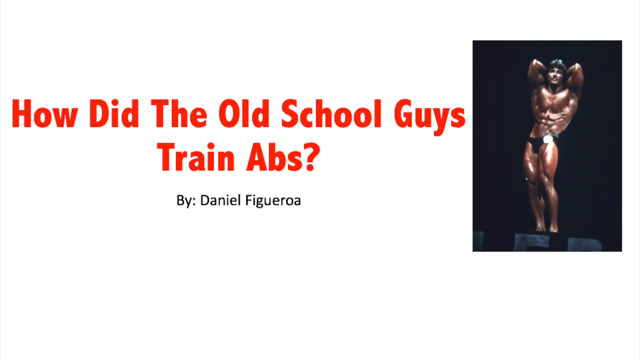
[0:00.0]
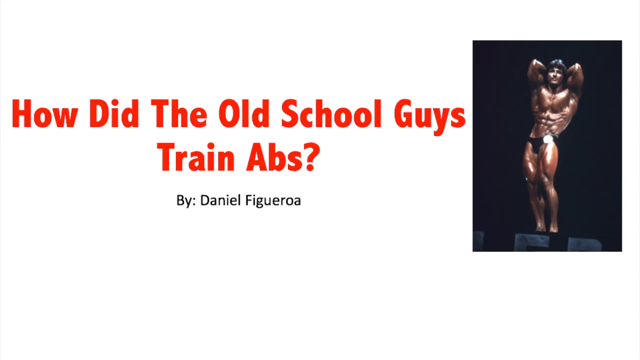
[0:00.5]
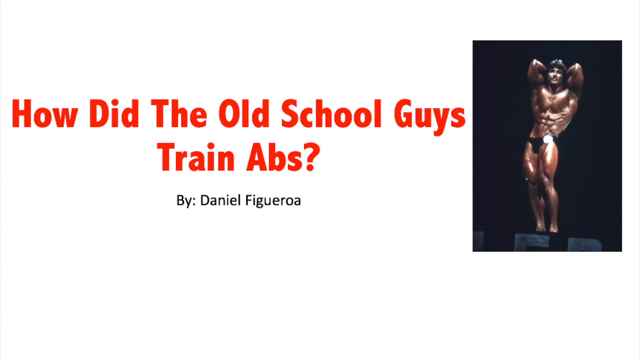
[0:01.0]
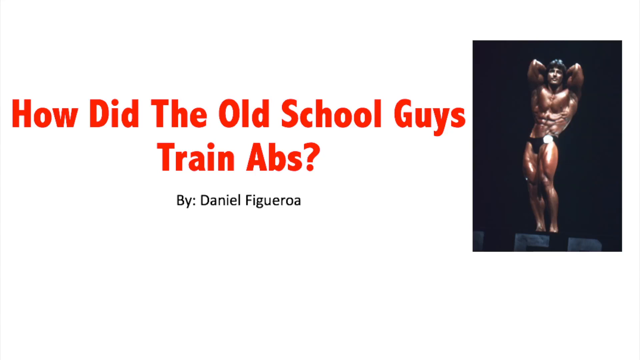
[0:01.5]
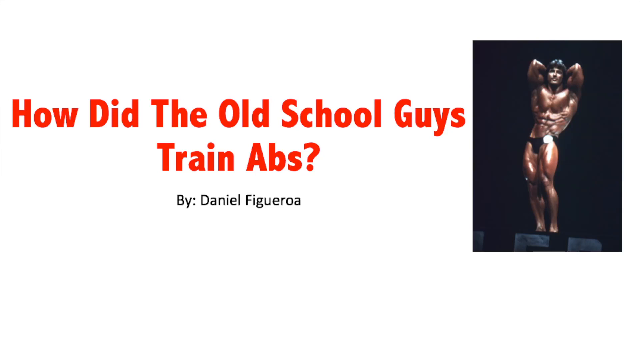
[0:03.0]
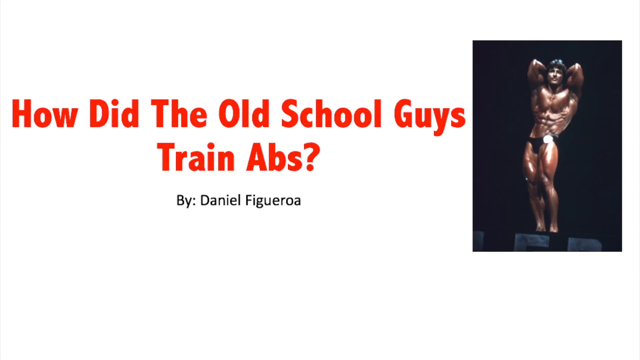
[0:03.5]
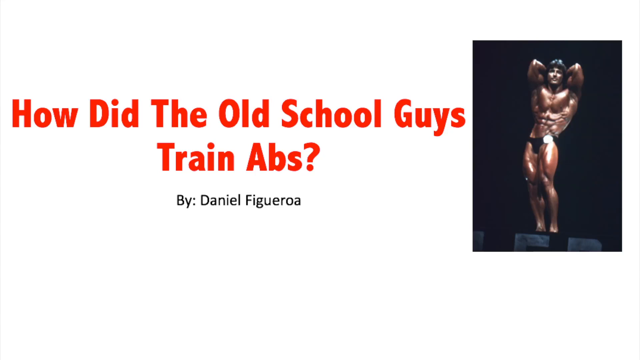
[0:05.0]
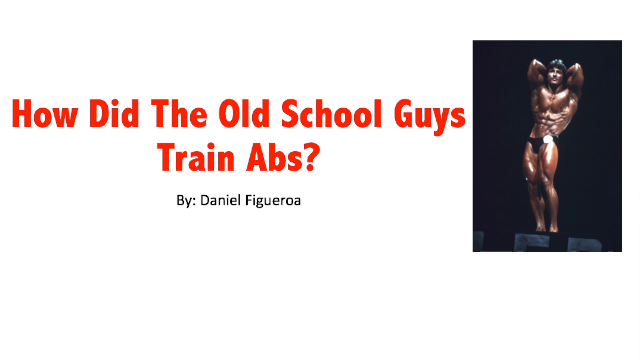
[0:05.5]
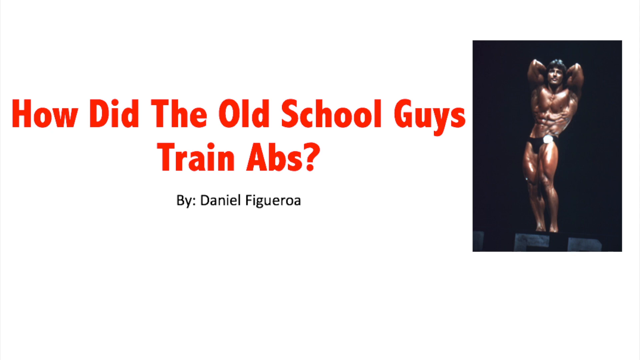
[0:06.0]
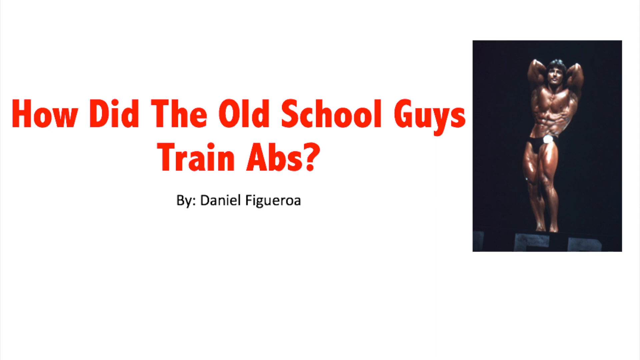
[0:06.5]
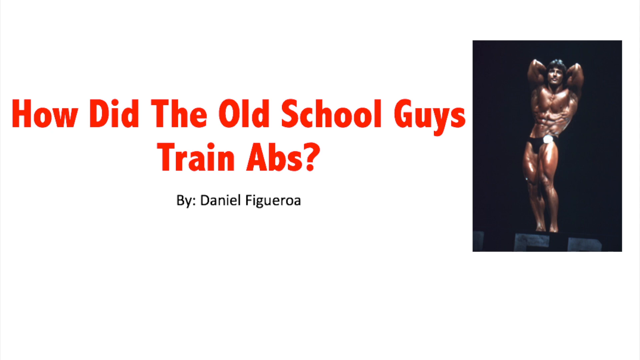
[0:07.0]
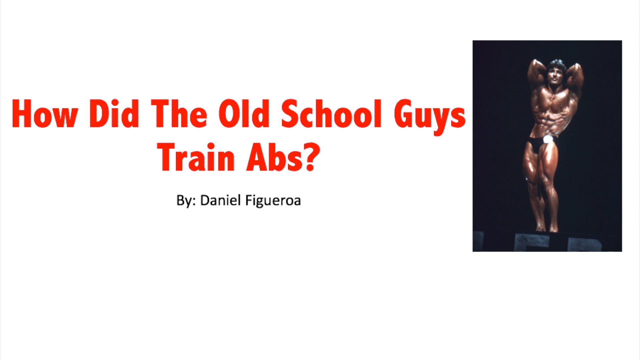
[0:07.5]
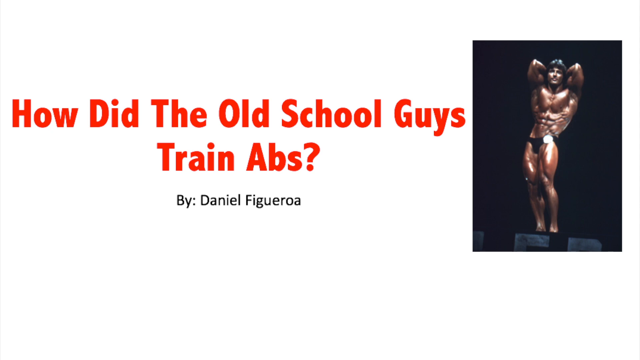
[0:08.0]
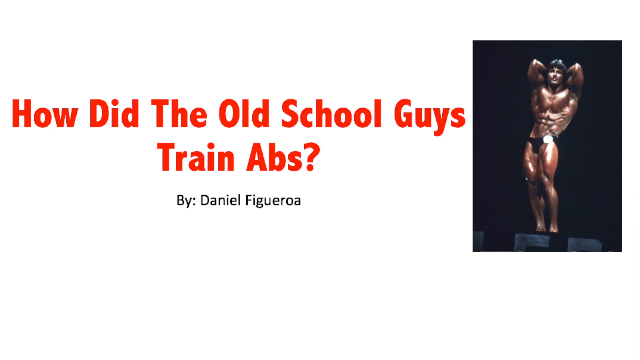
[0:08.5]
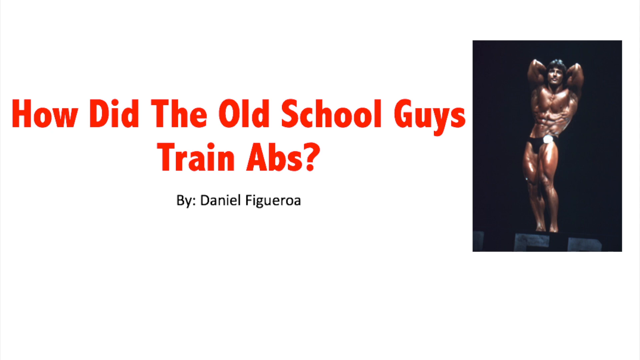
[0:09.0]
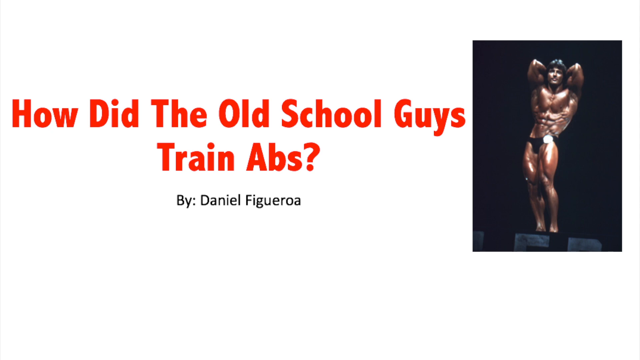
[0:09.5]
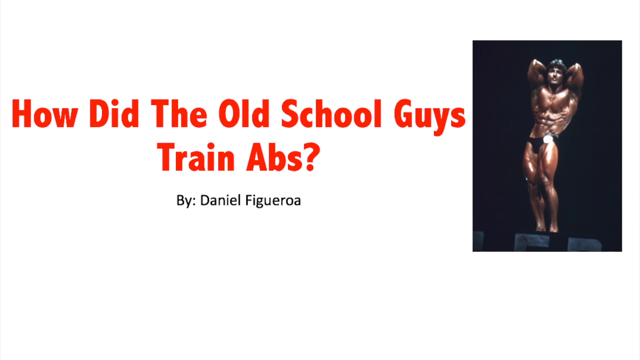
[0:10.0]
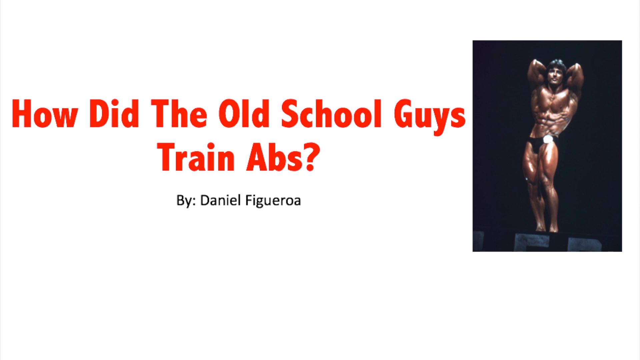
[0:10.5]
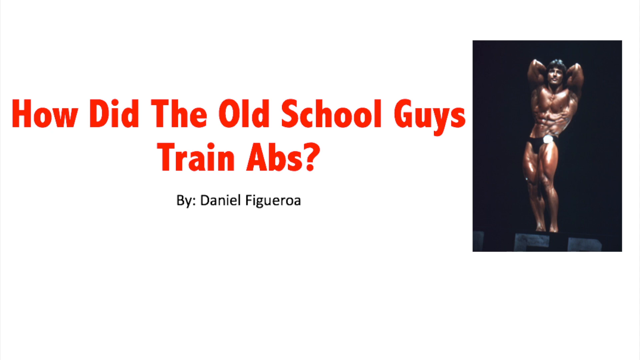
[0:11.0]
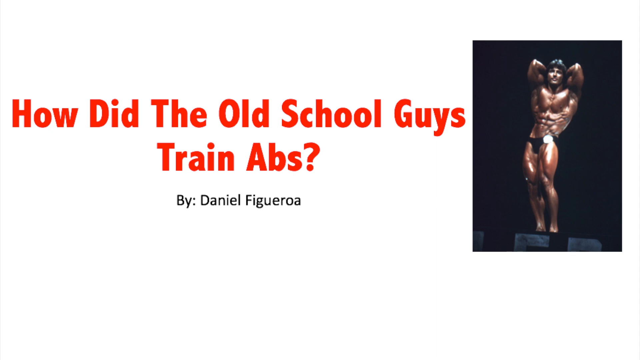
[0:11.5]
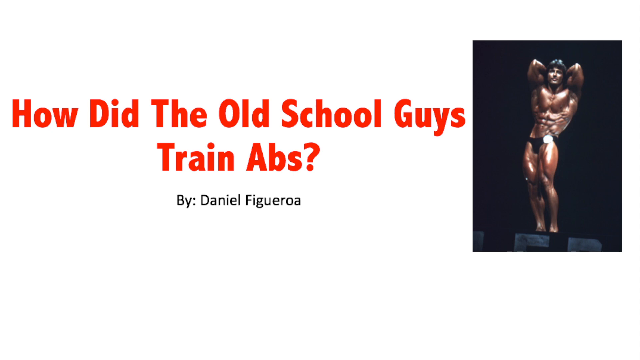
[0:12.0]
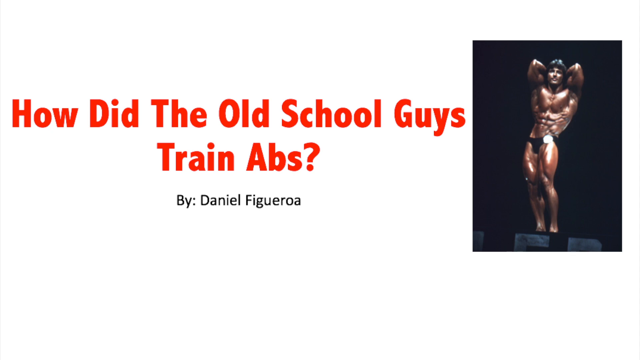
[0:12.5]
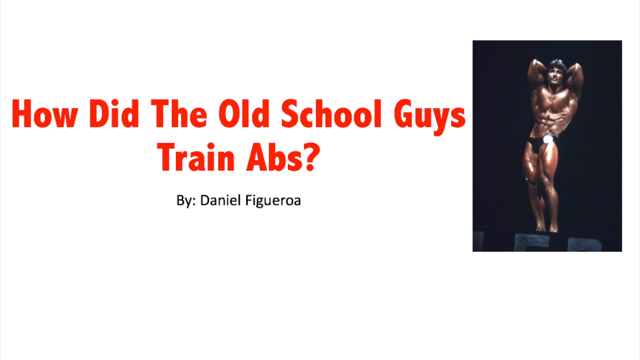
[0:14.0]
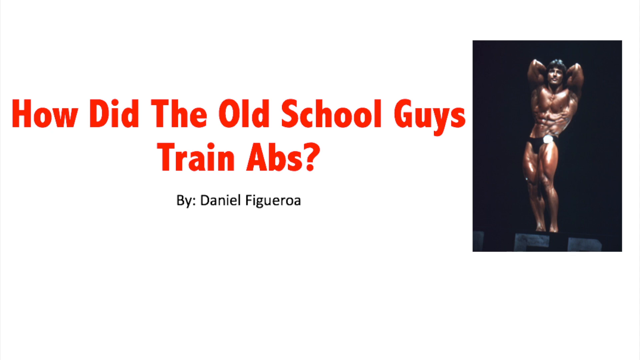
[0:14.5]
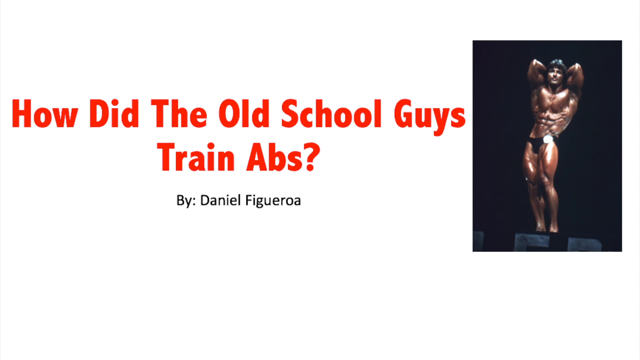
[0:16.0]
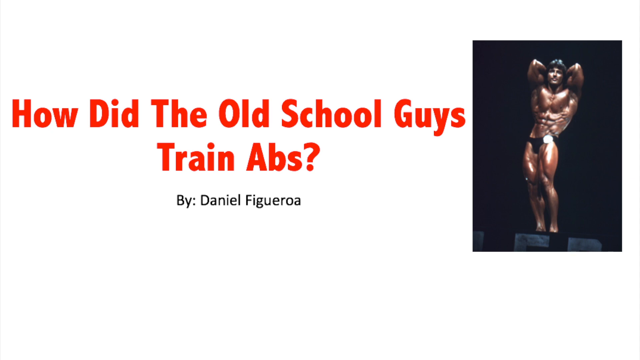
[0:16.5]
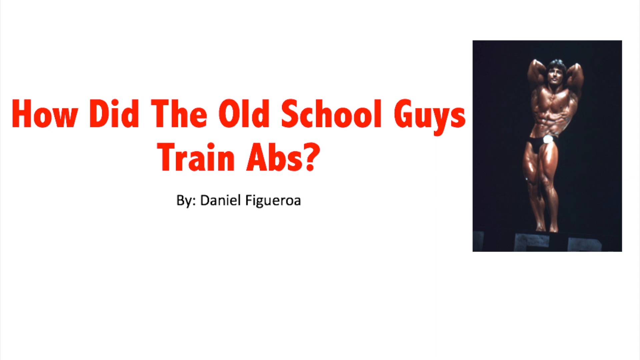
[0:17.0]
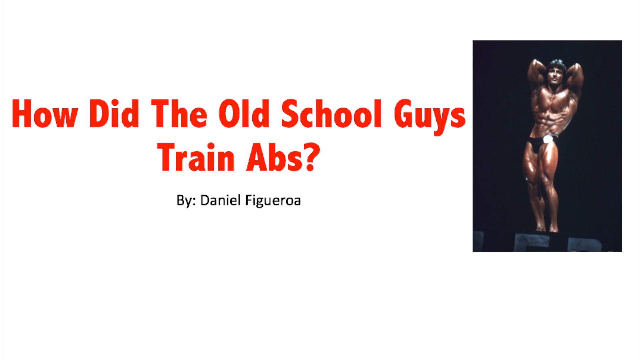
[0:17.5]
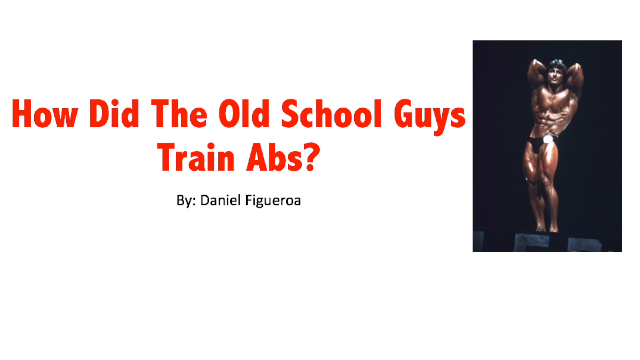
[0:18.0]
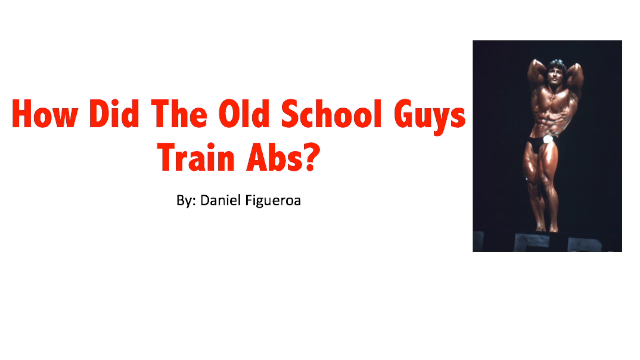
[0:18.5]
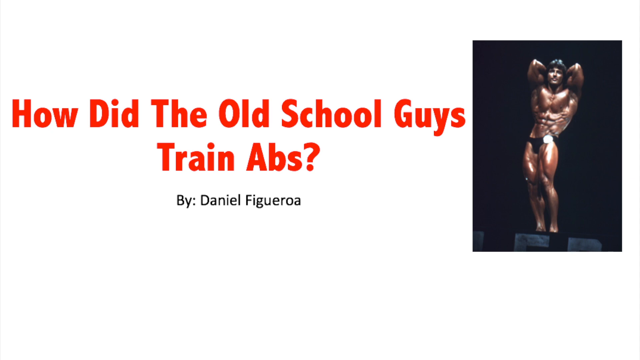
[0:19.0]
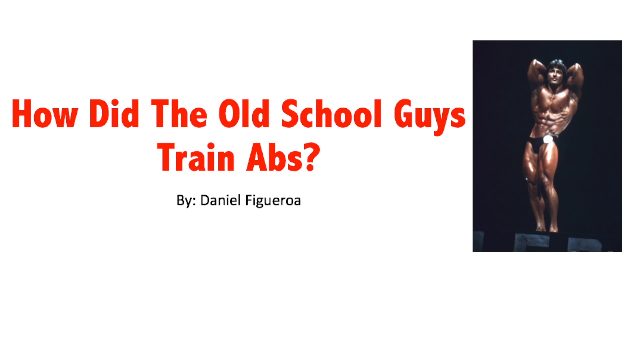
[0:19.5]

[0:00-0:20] The frame is a little wider than it is tall. Approximately in the center, big red text reads "how did the old-school guys train abs", and below it black text reads "by Daniel Figueroa". On the right is a bodybuilder from that era, possibly Frank Zane. He wears only little black underwear, is very tan, and has his arms behind his head so his elbows point up, facing roughly toward the camera. His abs are very well defined, and the pose shows them off. He has black hair that is a little longer and shaggier, and a small pinned circular item on his left hip likely denotes his posing number. Below him is a very dark stage, generally black with a little gray on it. Later the video moves to another slide.